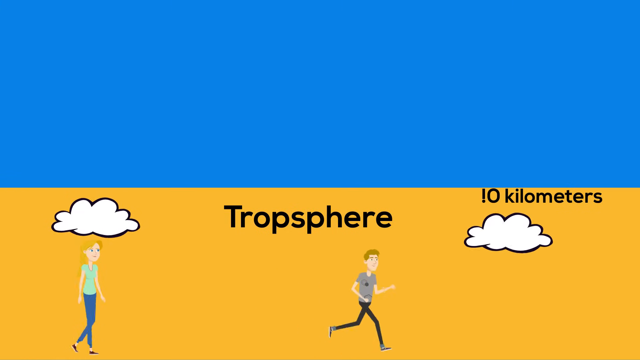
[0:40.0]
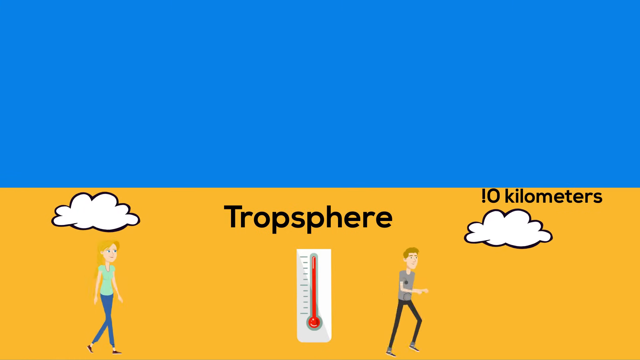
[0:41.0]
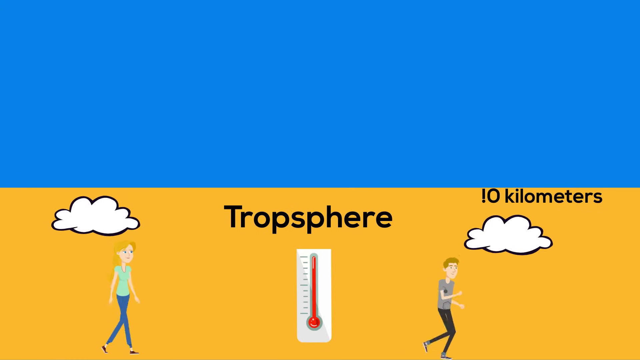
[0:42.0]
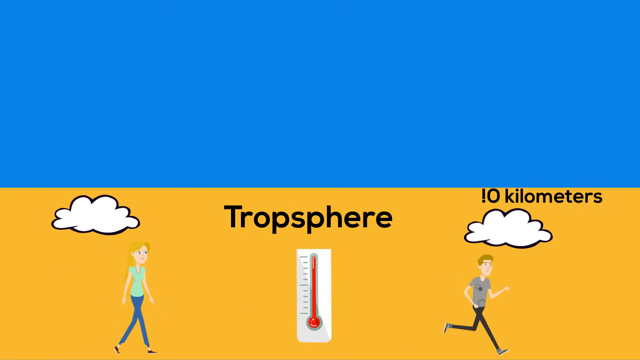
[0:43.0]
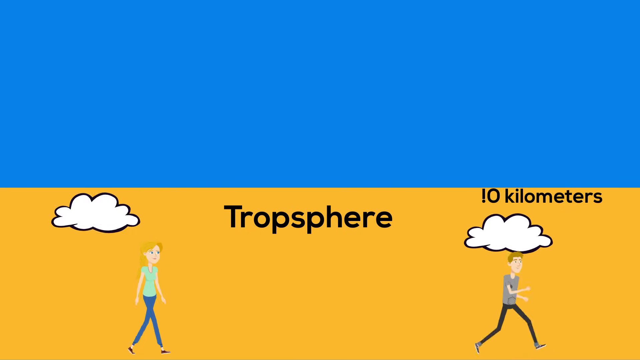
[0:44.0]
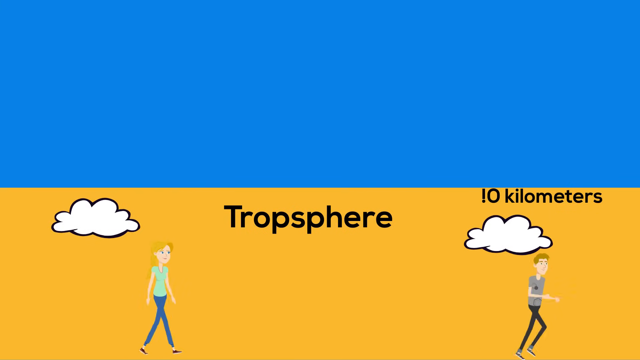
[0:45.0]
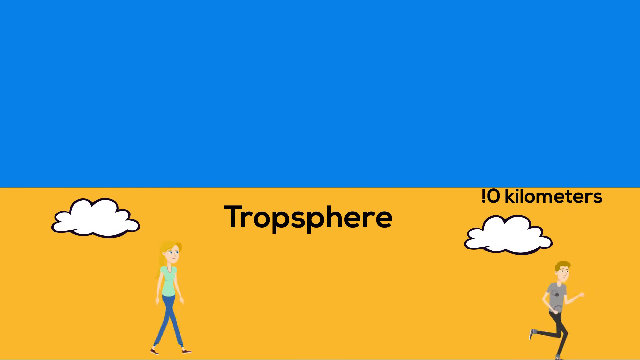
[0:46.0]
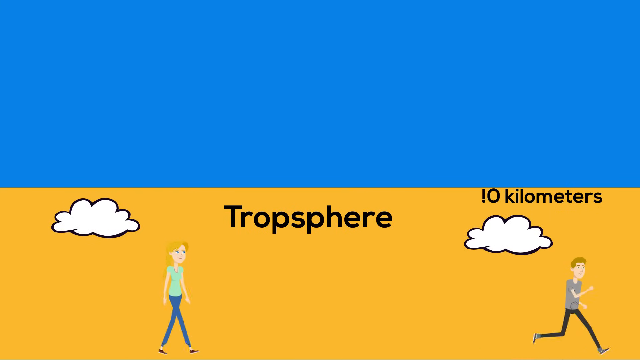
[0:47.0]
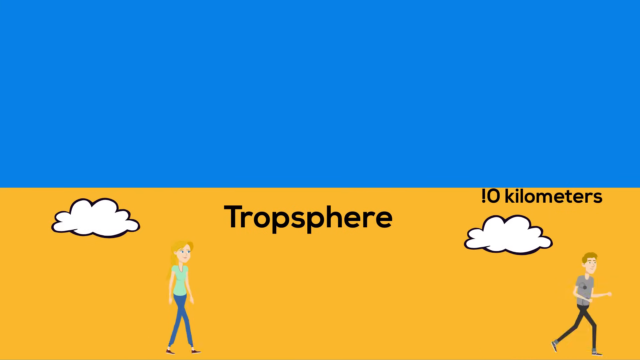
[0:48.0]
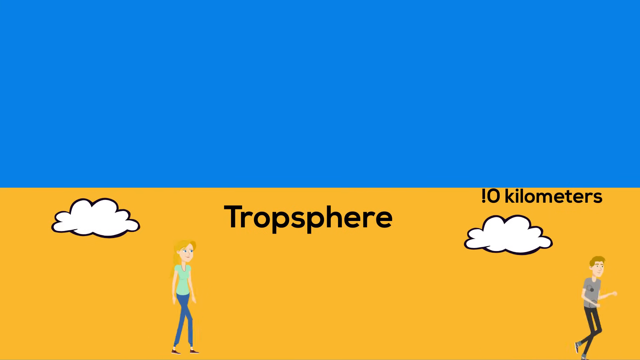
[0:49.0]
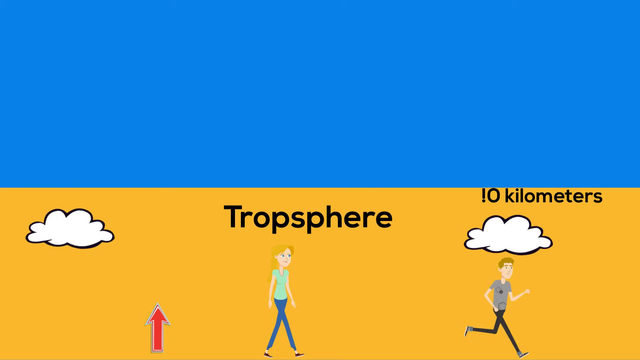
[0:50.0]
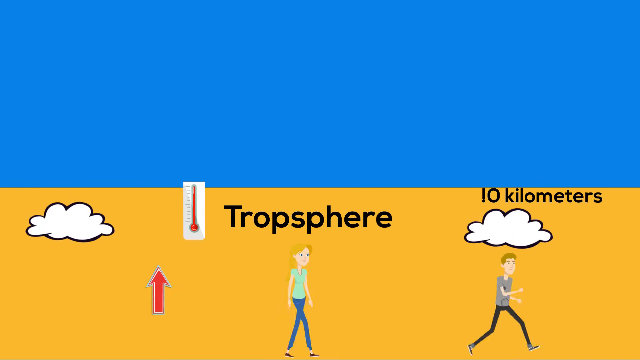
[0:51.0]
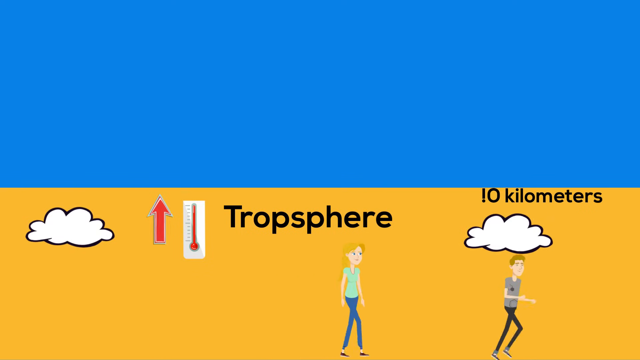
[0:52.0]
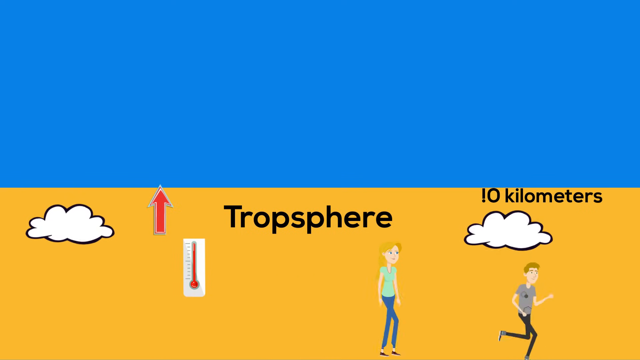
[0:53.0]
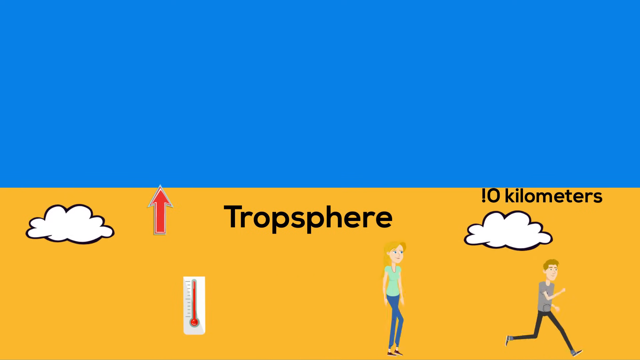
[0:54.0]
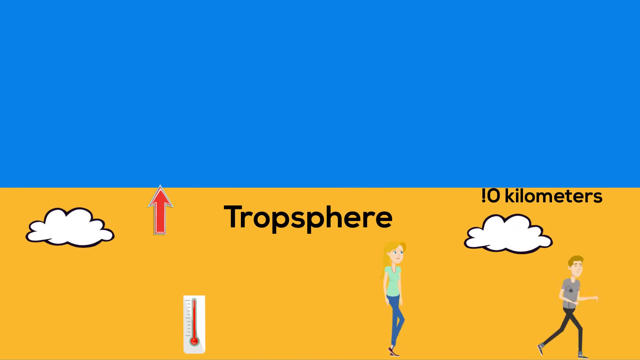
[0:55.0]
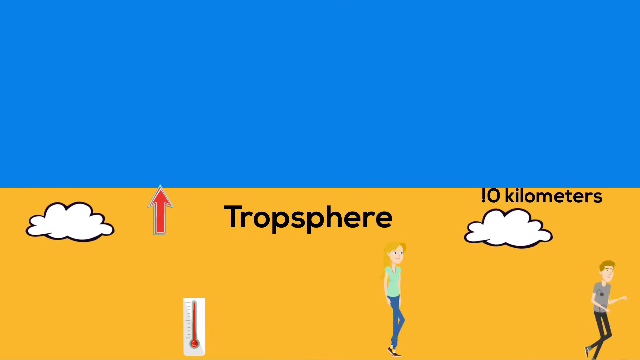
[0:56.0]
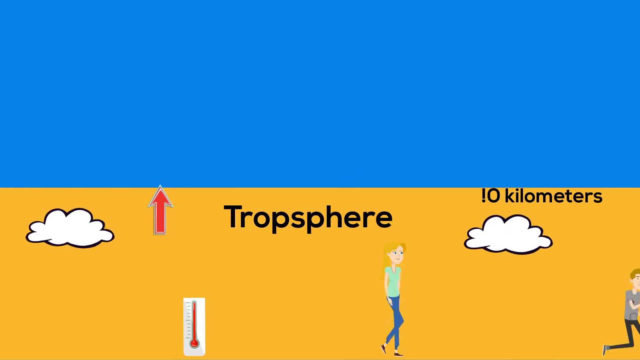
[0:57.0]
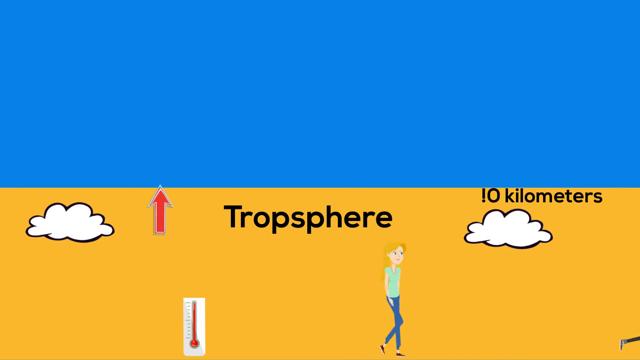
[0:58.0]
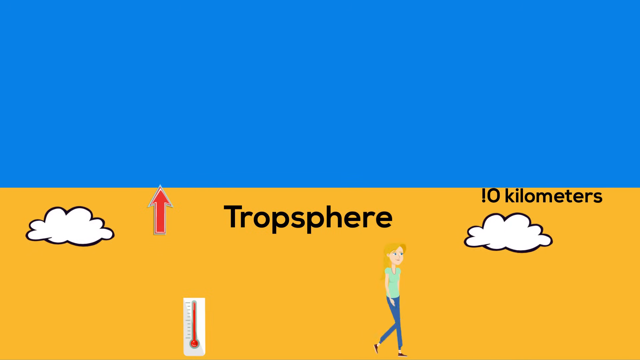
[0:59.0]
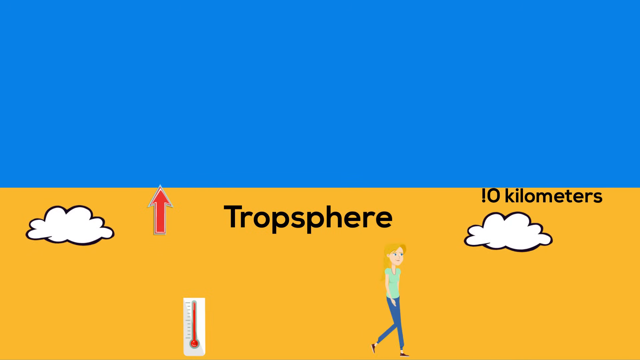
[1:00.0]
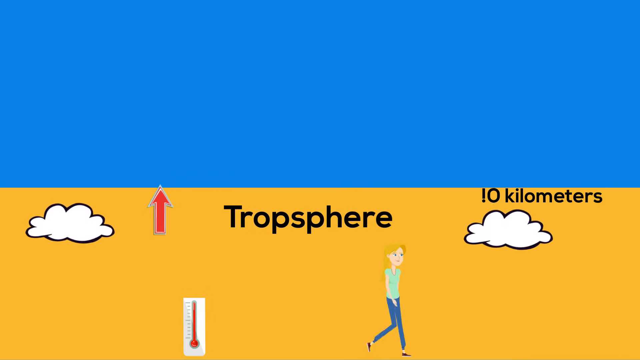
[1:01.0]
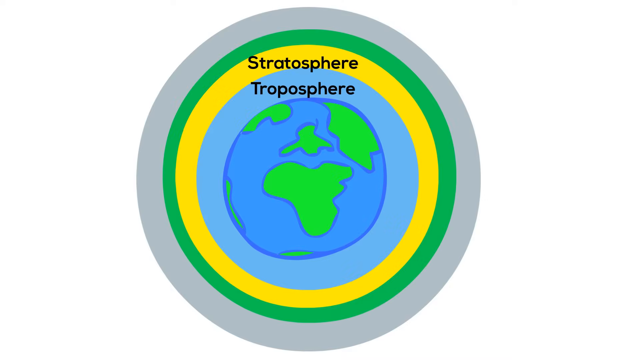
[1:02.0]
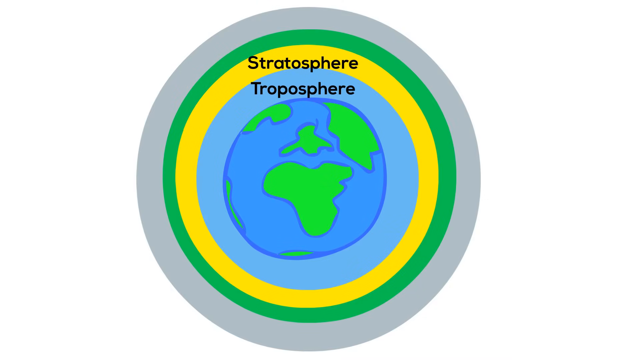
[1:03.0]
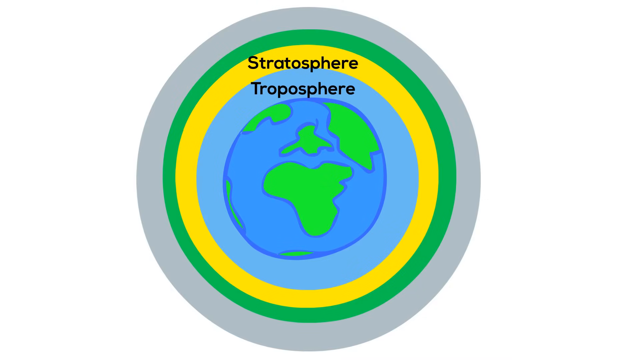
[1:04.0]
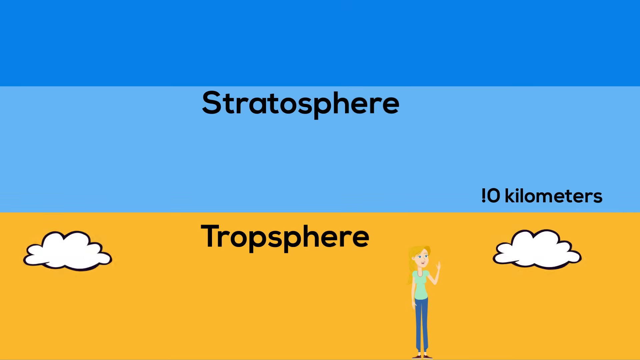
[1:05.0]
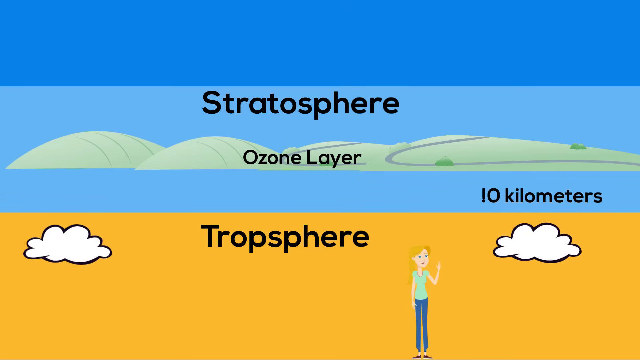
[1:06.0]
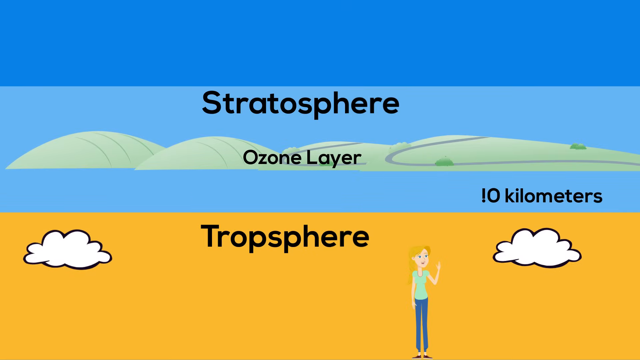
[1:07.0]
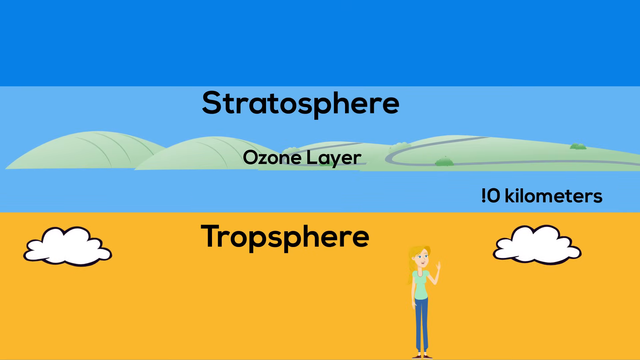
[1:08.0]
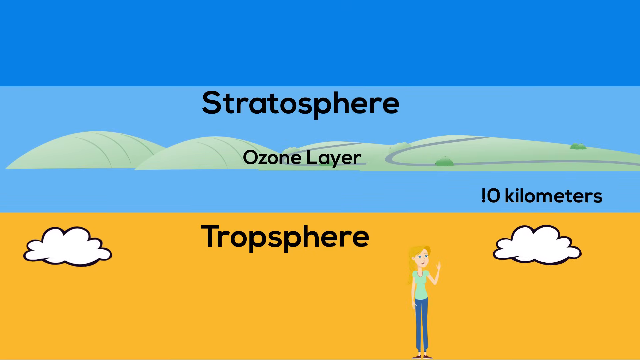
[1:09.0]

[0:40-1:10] An animation shows people walking and running. The top of the scene is entirely light blue and the bottom is a yellowish-orange color, with a woman walking on the bottom left and a man running on the bottom right. A temperature bar in the bottom middle is raised all the way to the top. The scene is labeled "troposphere" in black text at the top, and "10 kilometers" appears at the top right. The woman gets closer to the man as he runs but stays far behind, and a red arrow points to the top. The man eventually runs off screen to the right. The layer diagram is then shown again, with only the stratosphere and troposphere labeled.